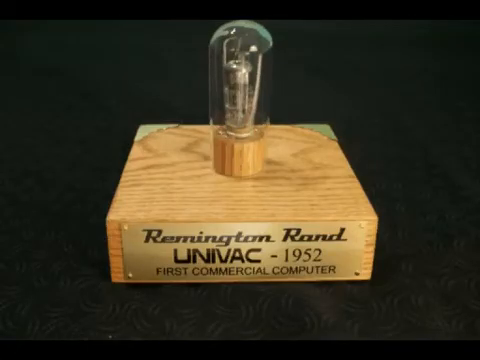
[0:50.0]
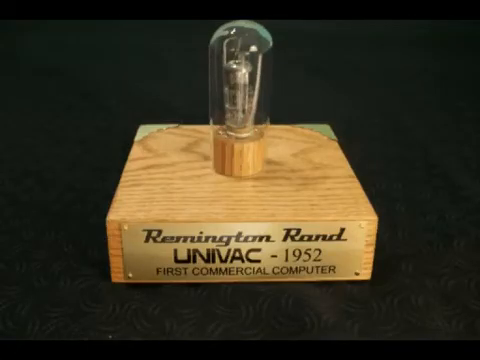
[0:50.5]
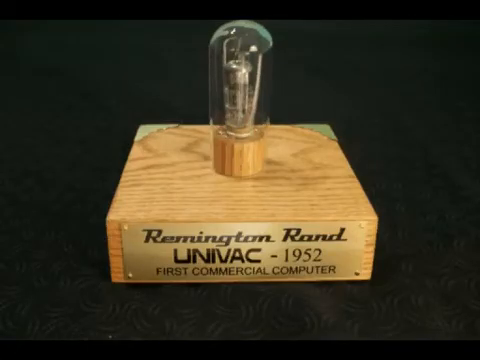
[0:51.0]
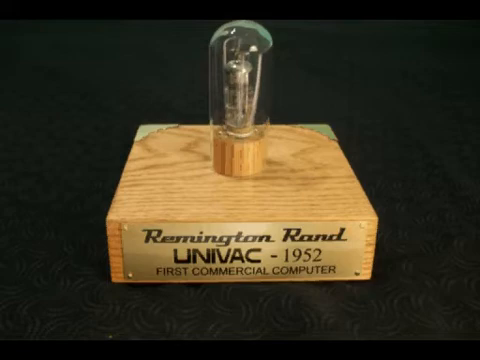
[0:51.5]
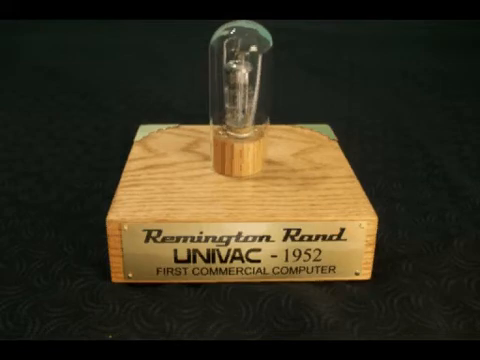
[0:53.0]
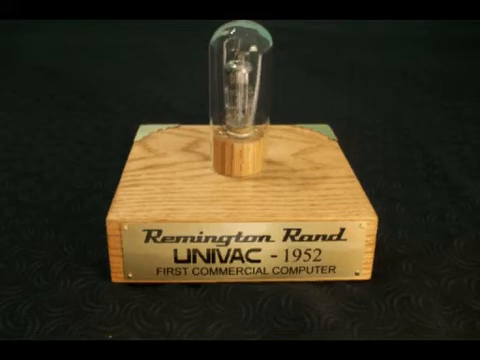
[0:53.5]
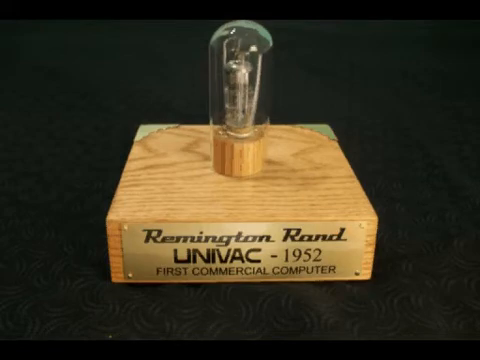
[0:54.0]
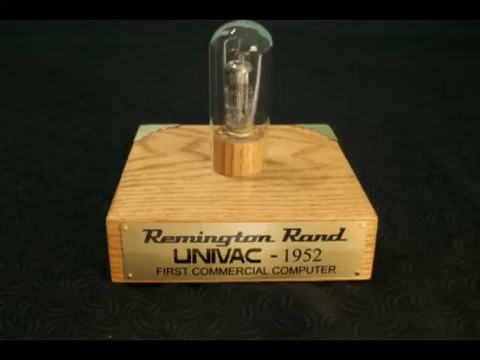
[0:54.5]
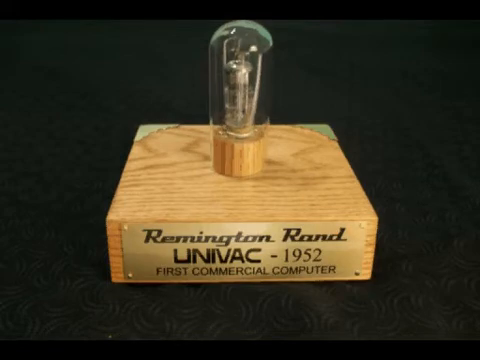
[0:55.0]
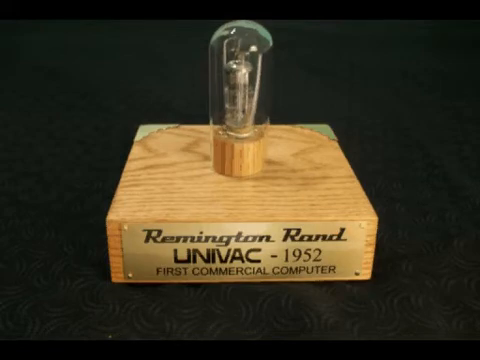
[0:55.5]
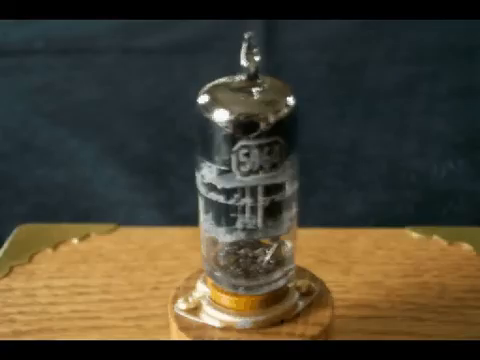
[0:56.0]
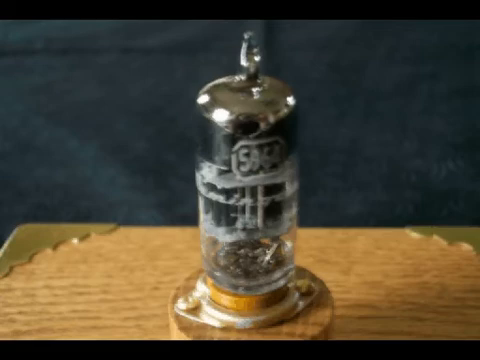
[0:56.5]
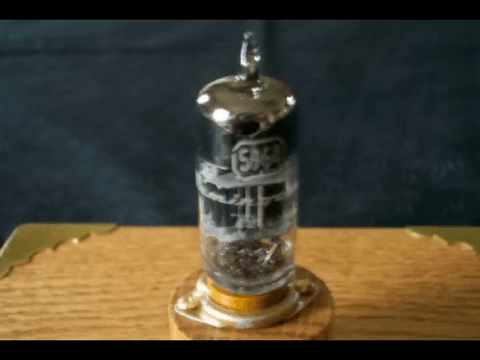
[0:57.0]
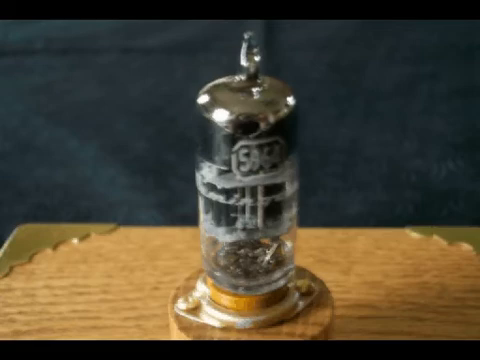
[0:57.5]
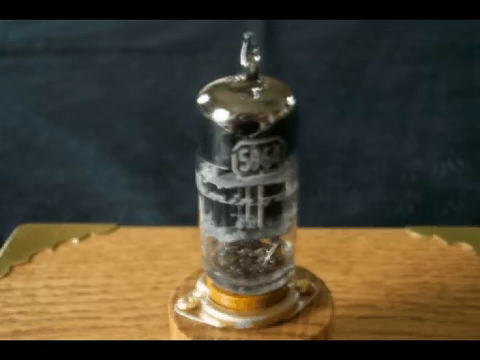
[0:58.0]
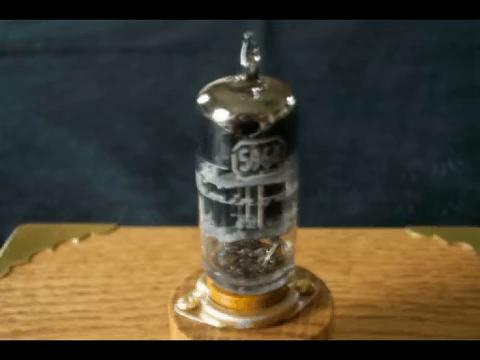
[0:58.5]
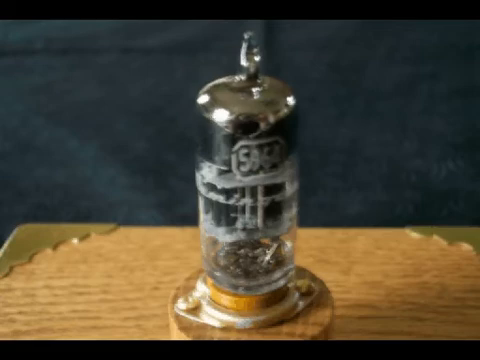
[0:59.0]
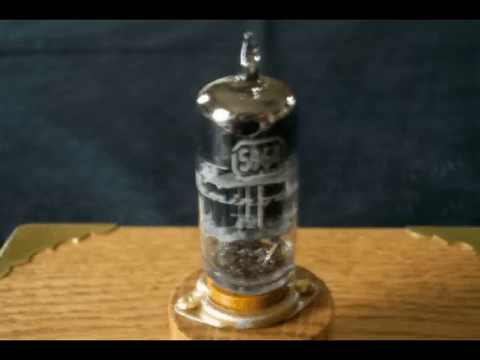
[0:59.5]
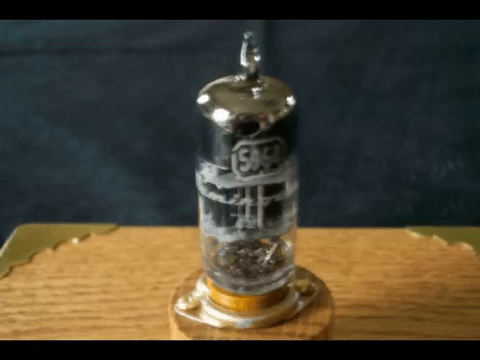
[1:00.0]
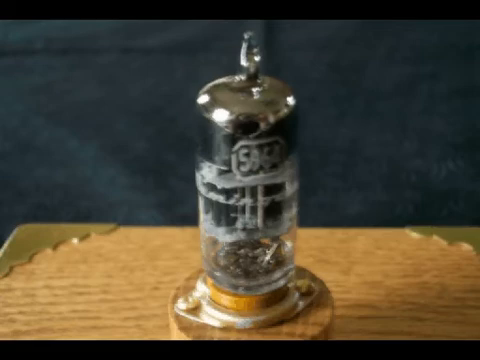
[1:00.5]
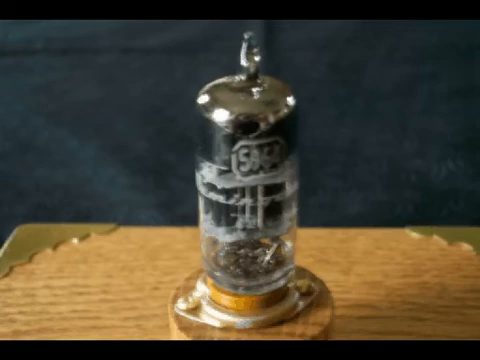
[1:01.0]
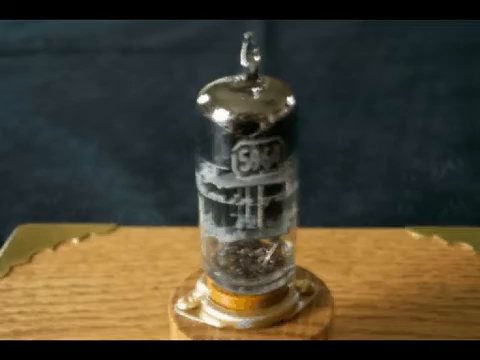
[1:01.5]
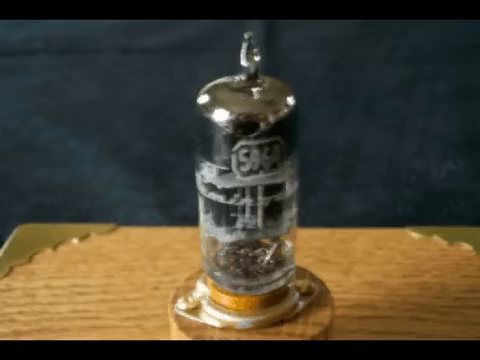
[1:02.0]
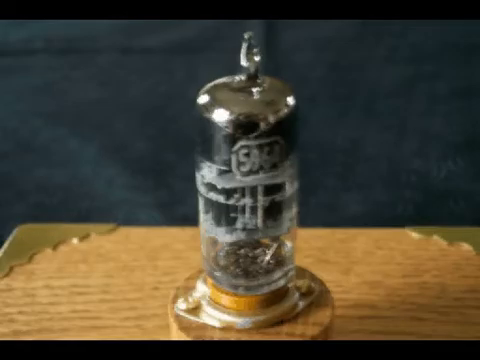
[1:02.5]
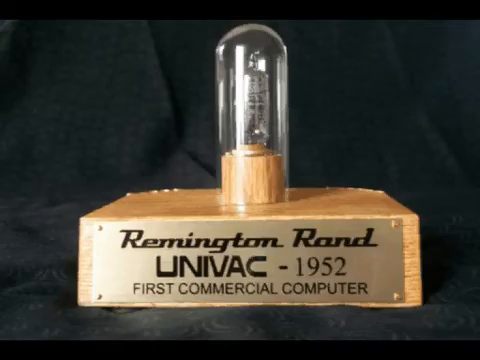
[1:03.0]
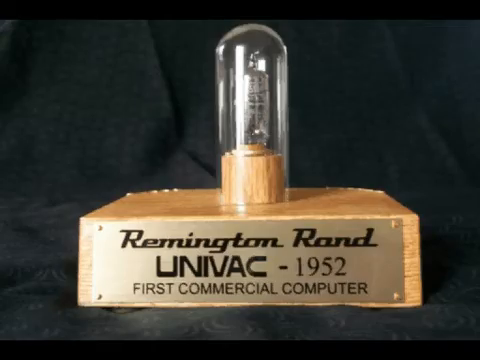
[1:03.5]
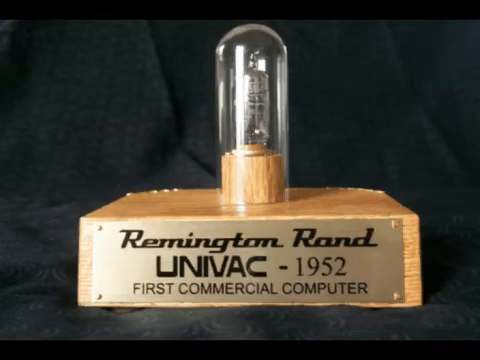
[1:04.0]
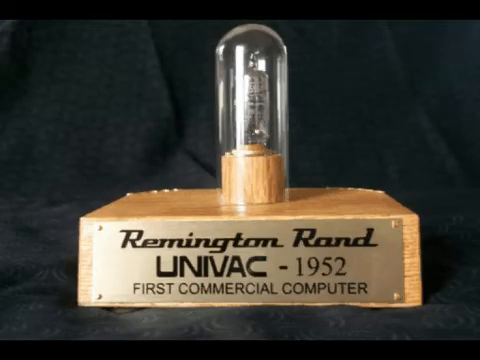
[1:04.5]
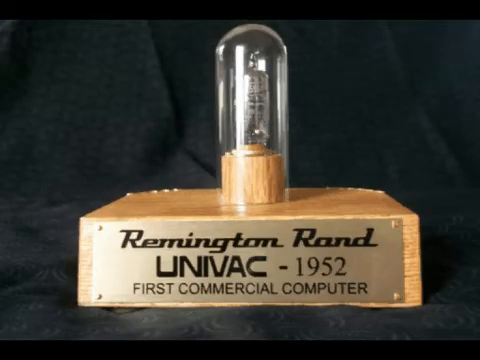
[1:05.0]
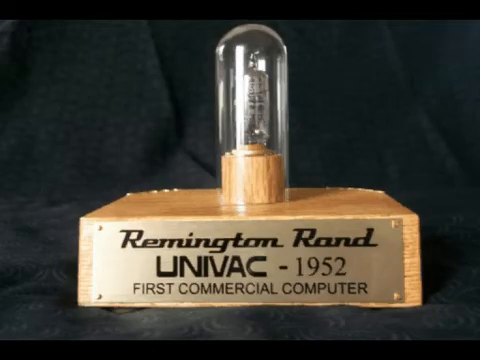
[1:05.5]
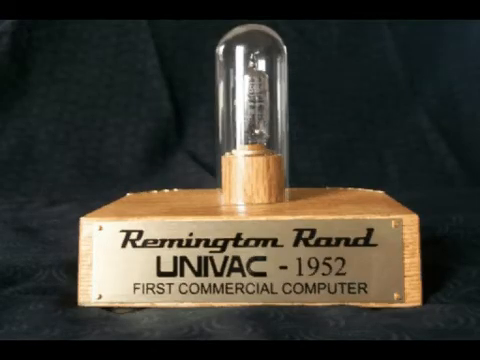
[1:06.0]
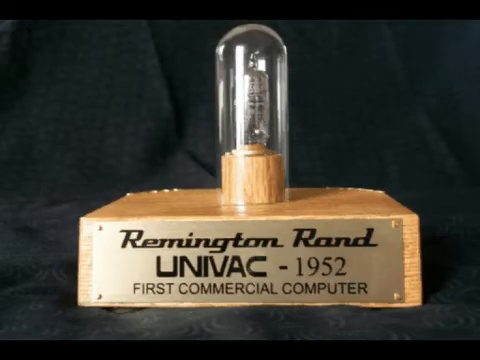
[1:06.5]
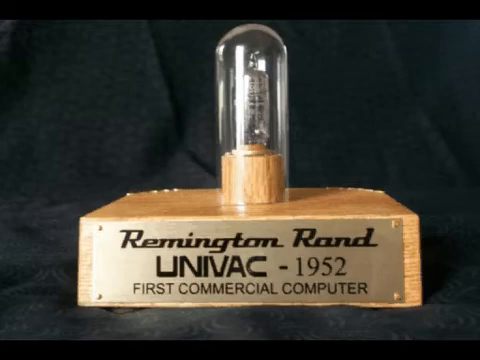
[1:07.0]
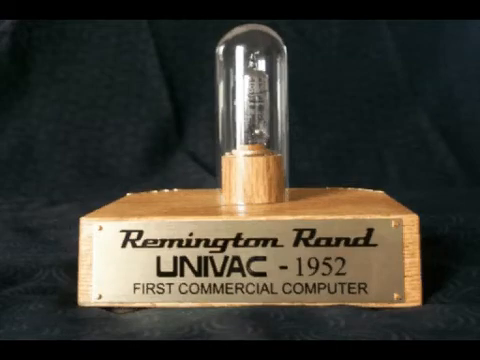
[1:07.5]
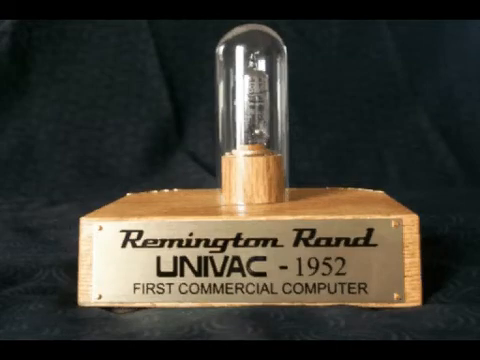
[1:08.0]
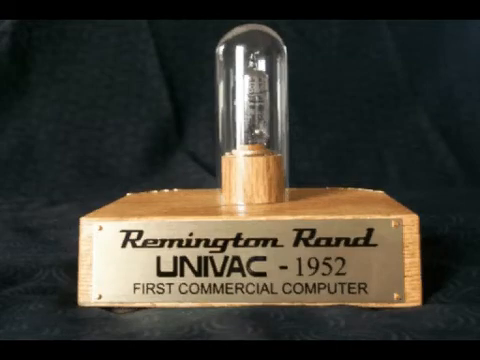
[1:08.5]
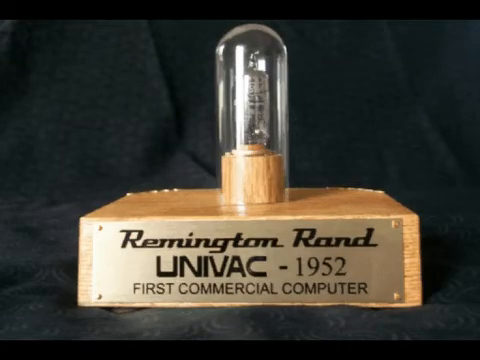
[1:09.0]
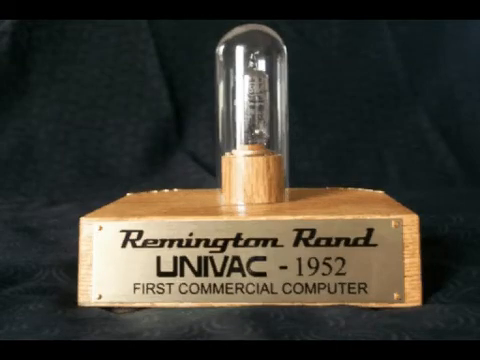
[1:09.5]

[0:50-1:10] A block of wood rests on top of a dark carpet that is barely visible. A light shines on it and reflects off the brass plate on the front. The block is stained and shows wood patterns. The brass plate on its front has three lines of text: the top row reads "Remington Rand" in cursive, the second row reads "UNIVAC-1952" in all caps, and the third row reads "FIRST COMMERCIAL COMPUTER" in all caps. At the back of the wood are corner brass plates. In the center on top is a circular knob of wood, and on top of that is a light bulb with several layers of glass. The video then shows another view of what appears to be a cathode bulb of some sort, with the numbers "5964" written on it and many white squiggles going around the bulb.